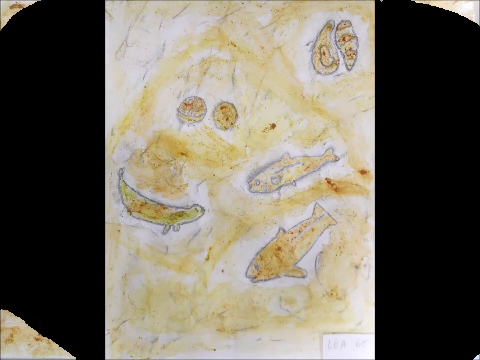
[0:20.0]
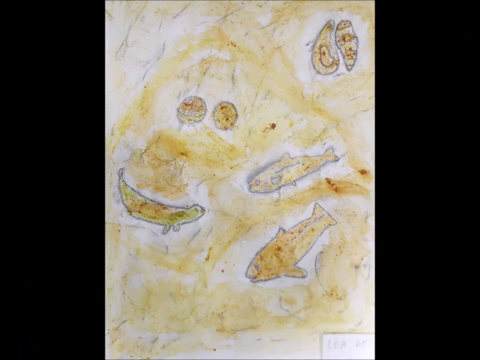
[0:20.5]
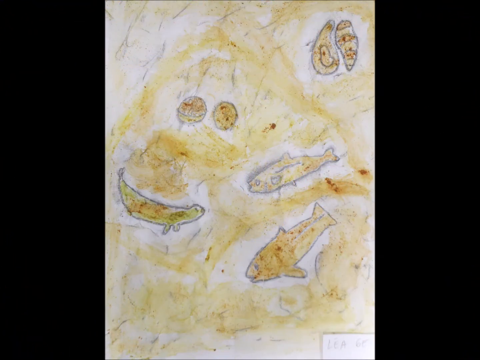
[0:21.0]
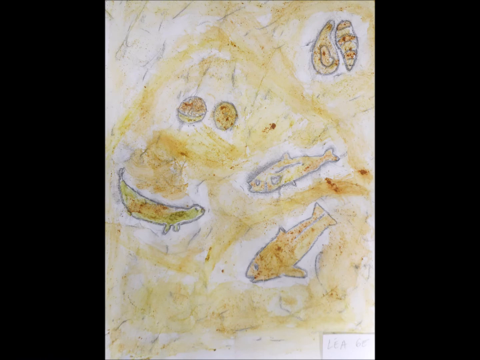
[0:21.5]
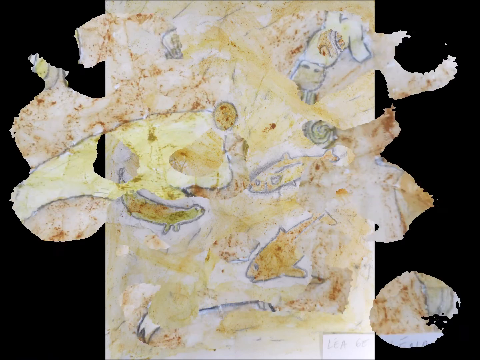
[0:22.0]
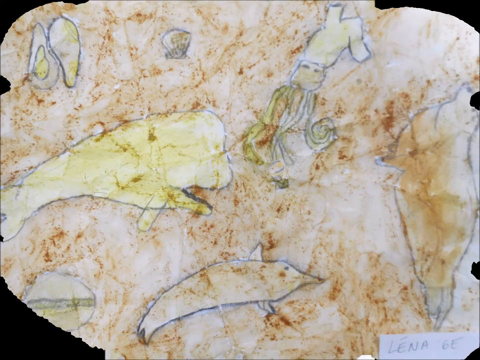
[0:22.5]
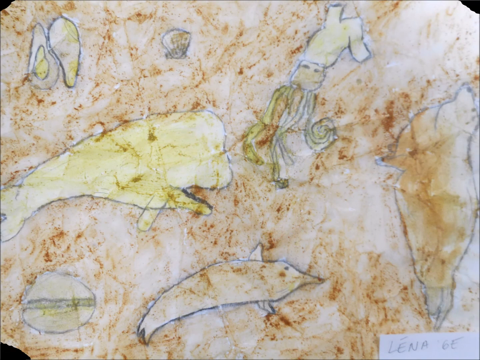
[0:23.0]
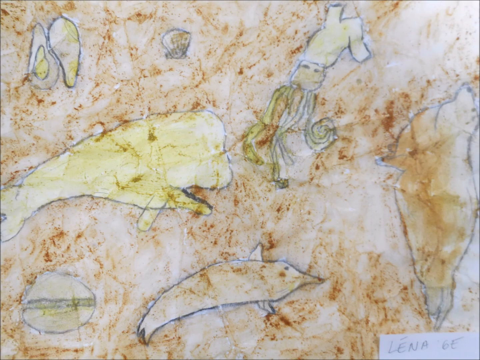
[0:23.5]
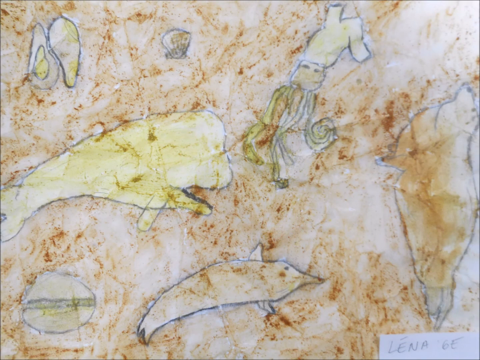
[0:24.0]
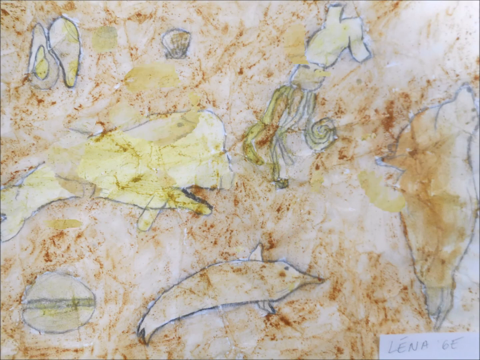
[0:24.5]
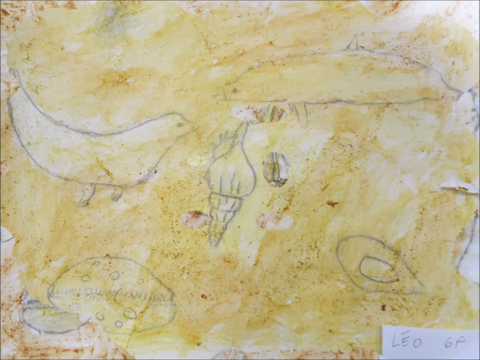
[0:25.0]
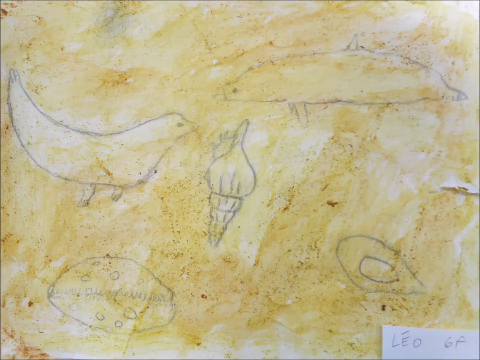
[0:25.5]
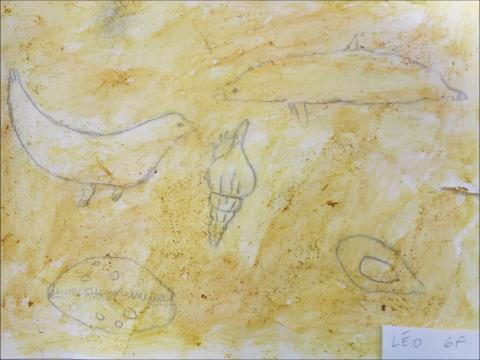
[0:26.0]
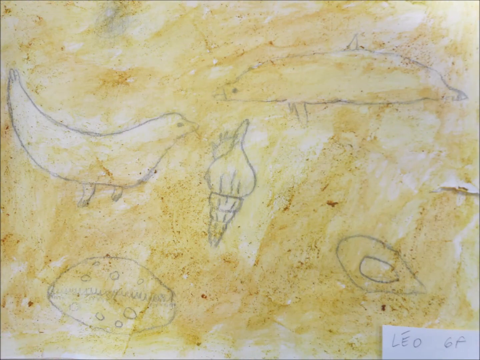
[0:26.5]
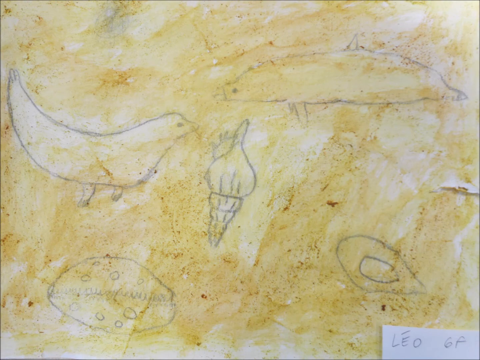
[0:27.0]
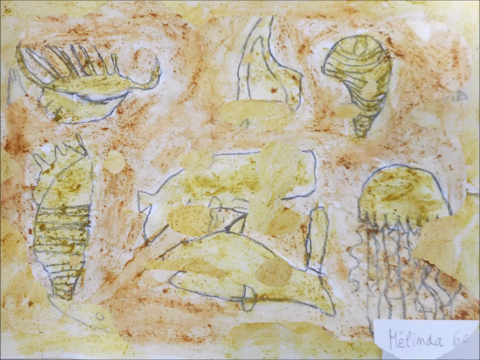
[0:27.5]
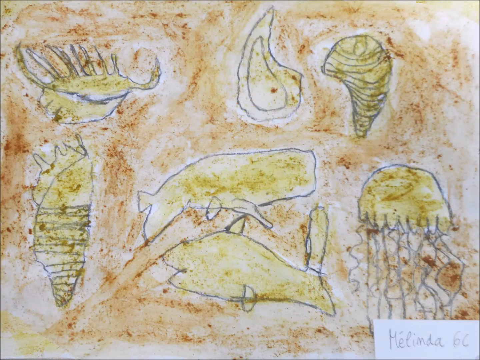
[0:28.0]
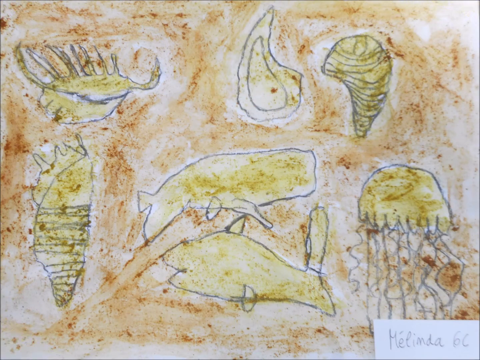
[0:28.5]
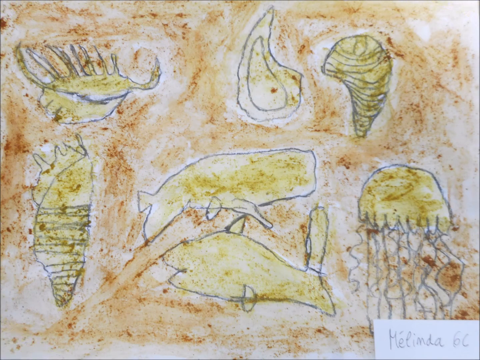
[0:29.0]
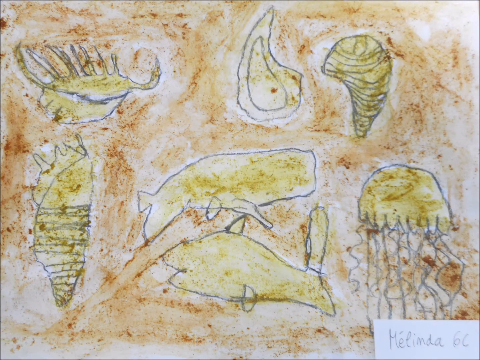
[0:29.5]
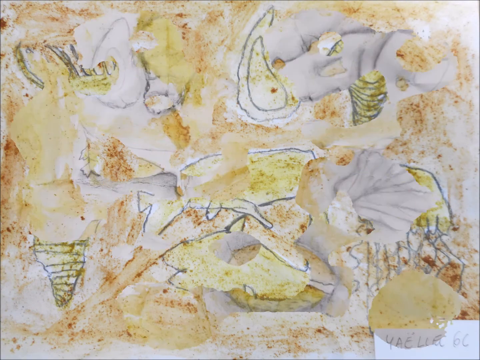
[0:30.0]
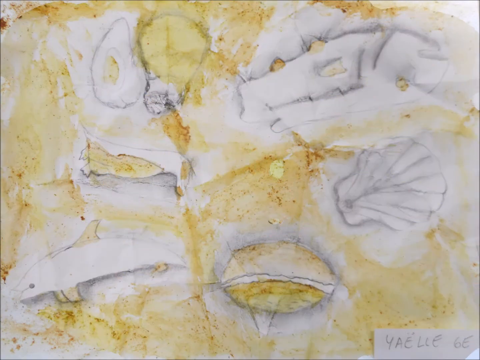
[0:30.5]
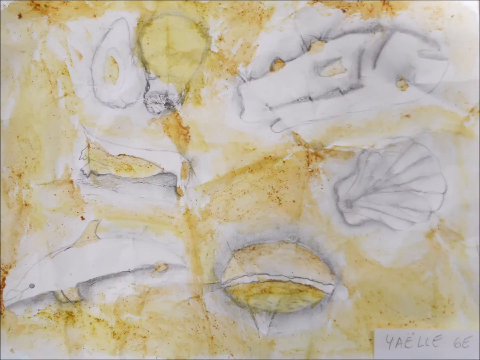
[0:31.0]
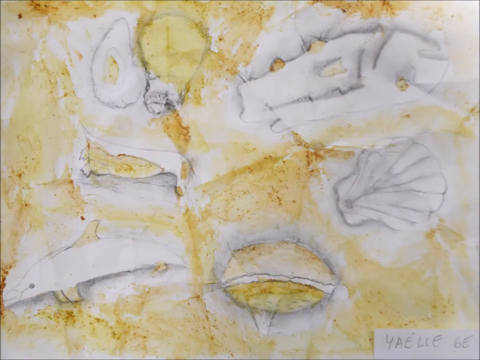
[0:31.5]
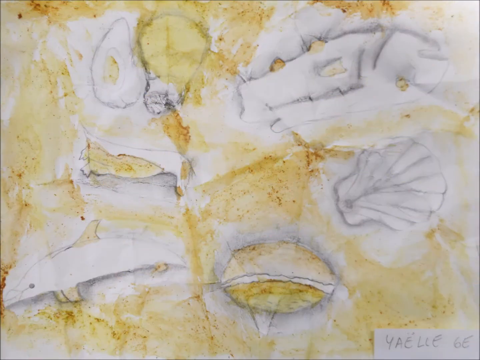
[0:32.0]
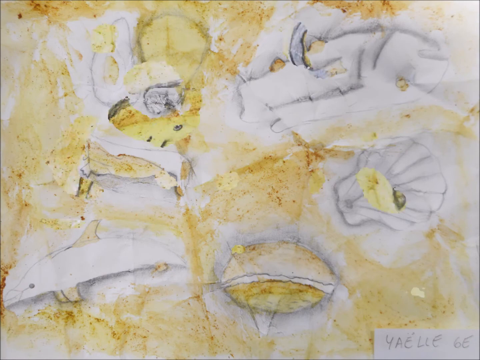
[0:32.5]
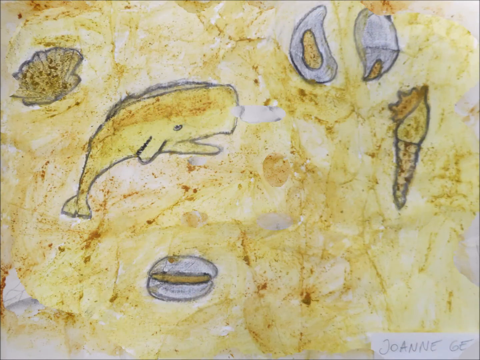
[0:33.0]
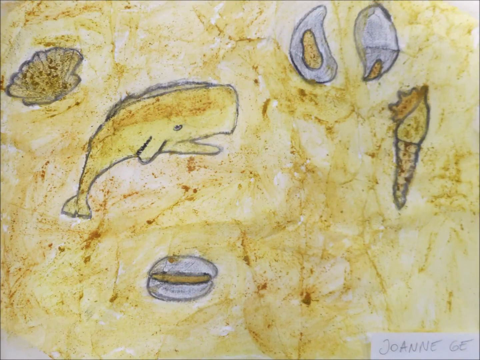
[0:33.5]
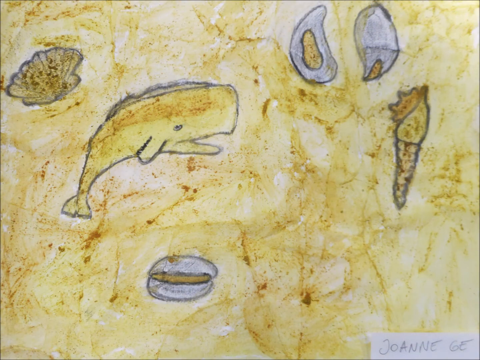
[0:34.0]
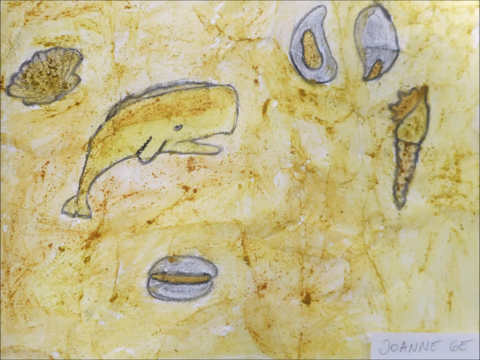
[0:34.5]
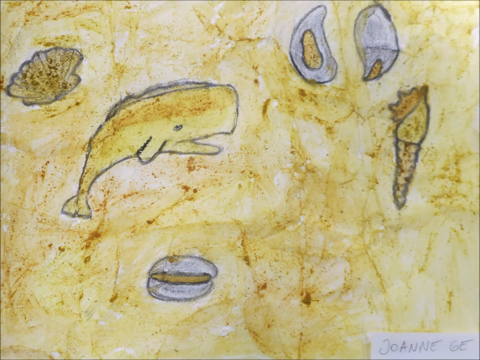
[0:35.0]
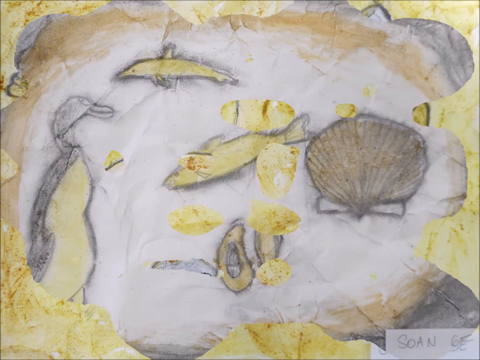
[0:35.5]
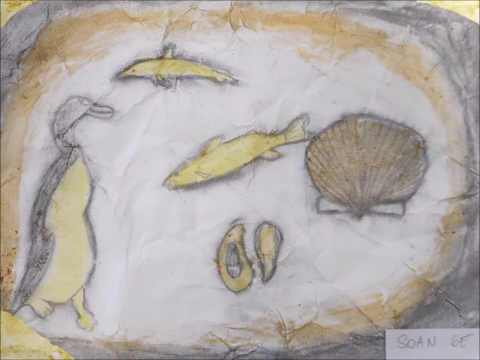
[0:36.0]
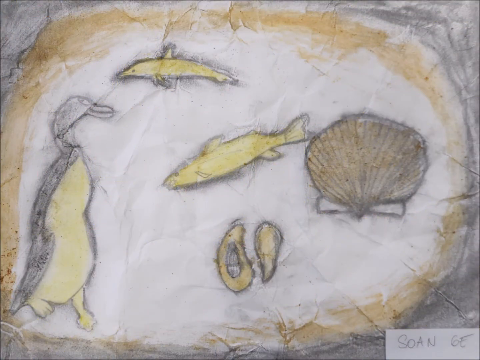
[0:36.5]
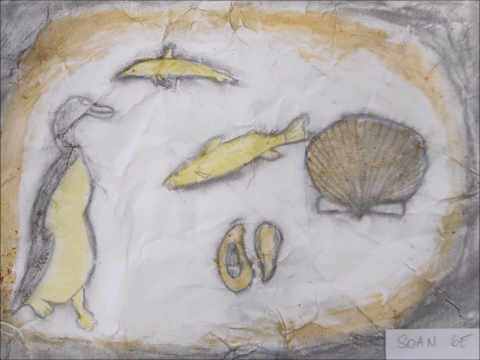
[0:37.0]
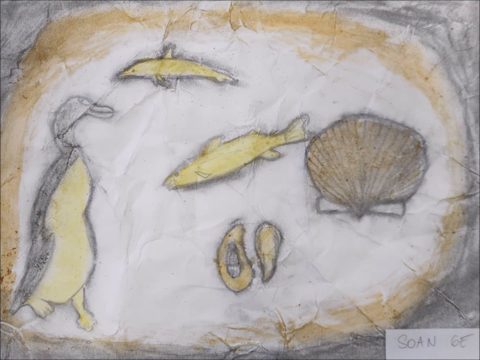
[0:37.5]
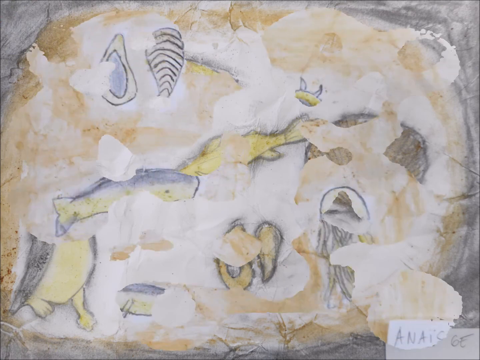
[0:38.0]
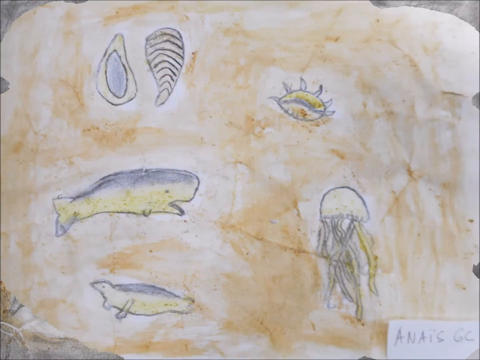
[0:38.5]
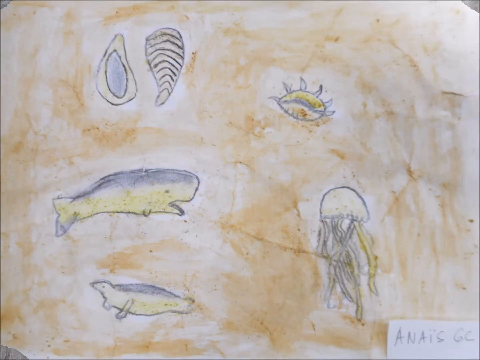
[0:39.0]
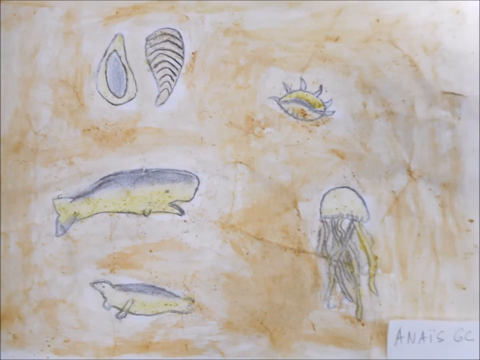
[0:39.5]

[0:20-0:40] The video continues with what appear to be children's drawings of underwater creatures, drawn in pencil and colored with yellow and maybe brown. One shows different fish, oysters, and shells. The next shows a whale, a shrimp, an oyster, and a dolphin. Another shows a seal, a starfish, a mollusk, and a whale, and yet another shows different types of fish, a whale, a dolphin, squids, and a jellyfish.